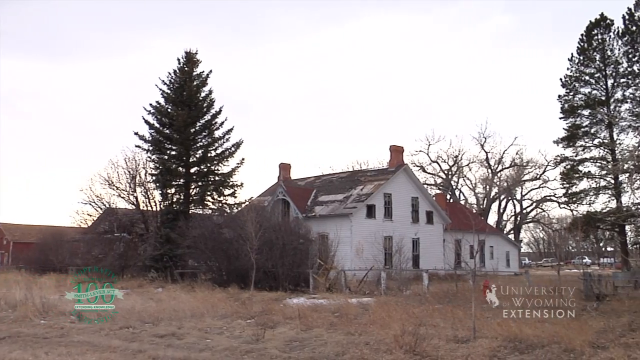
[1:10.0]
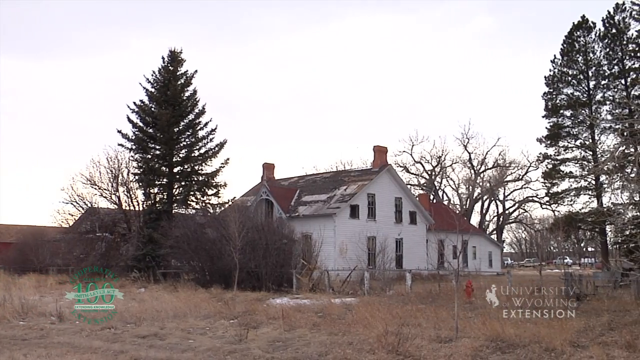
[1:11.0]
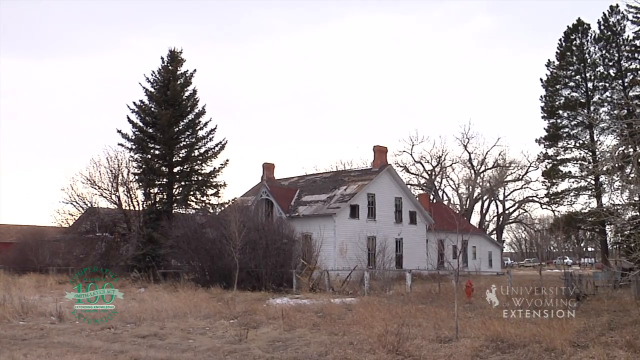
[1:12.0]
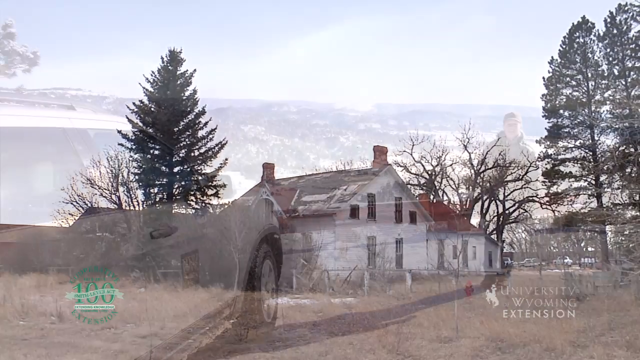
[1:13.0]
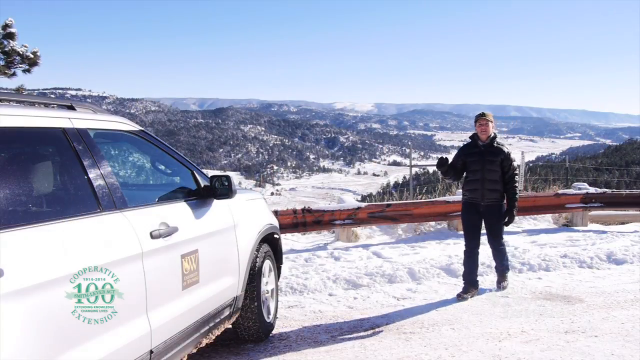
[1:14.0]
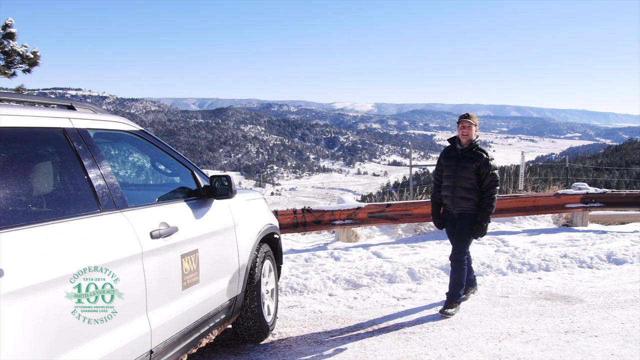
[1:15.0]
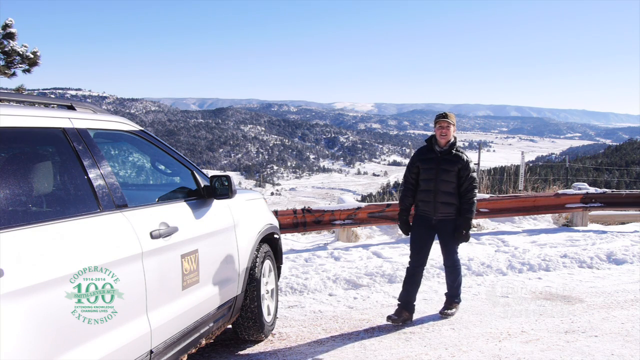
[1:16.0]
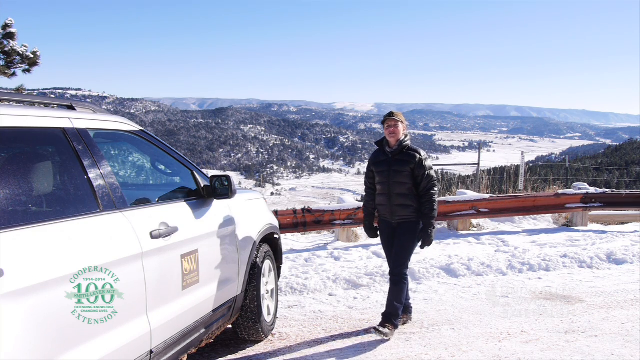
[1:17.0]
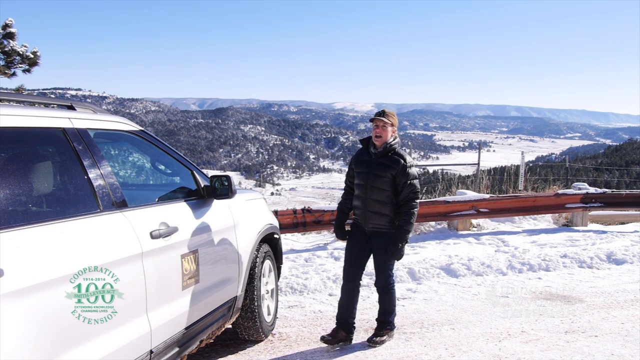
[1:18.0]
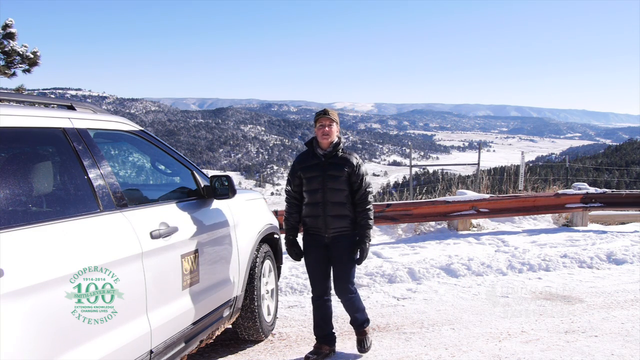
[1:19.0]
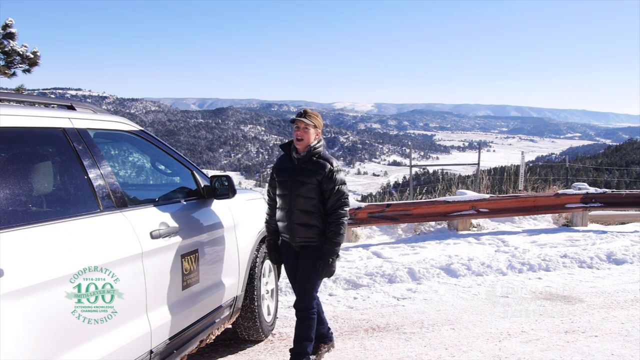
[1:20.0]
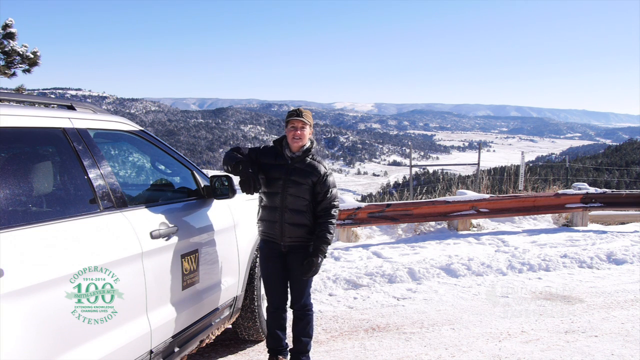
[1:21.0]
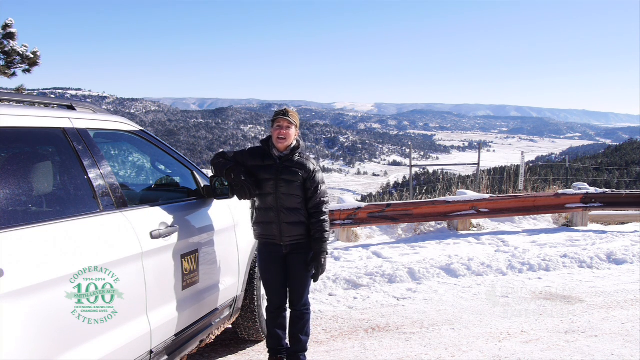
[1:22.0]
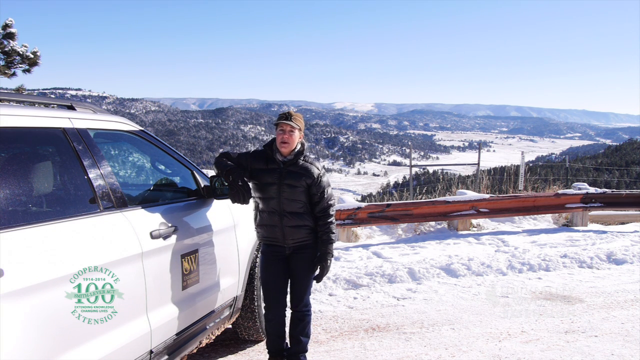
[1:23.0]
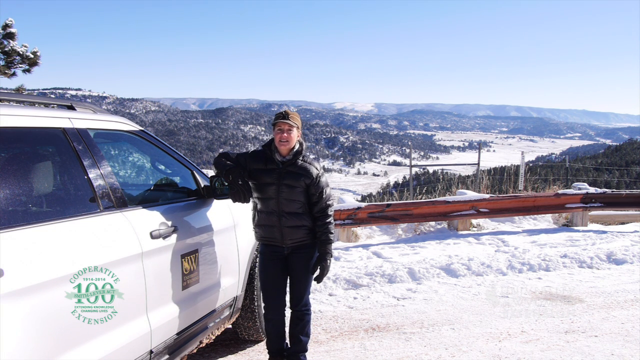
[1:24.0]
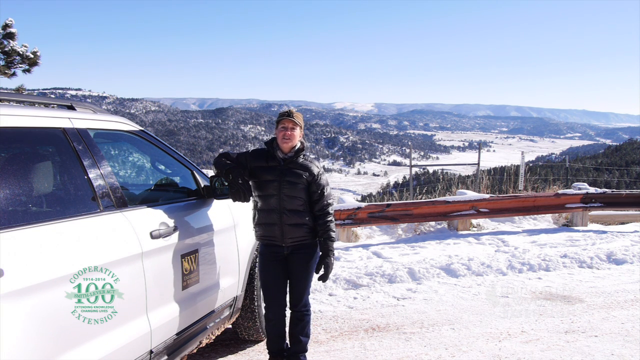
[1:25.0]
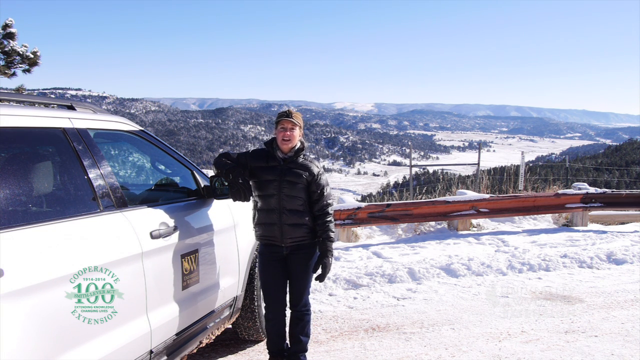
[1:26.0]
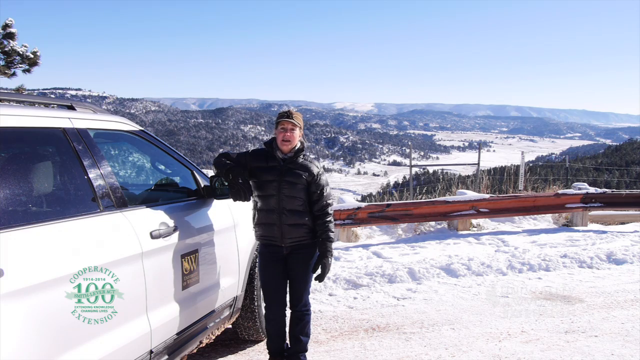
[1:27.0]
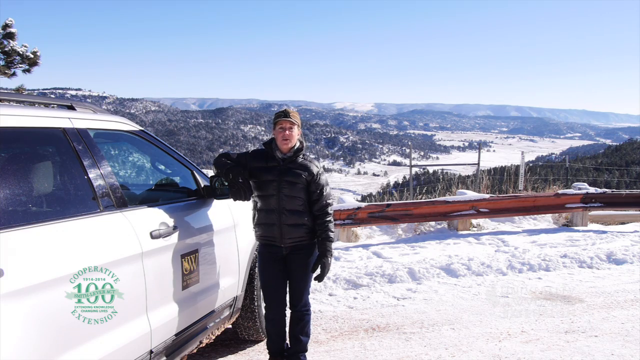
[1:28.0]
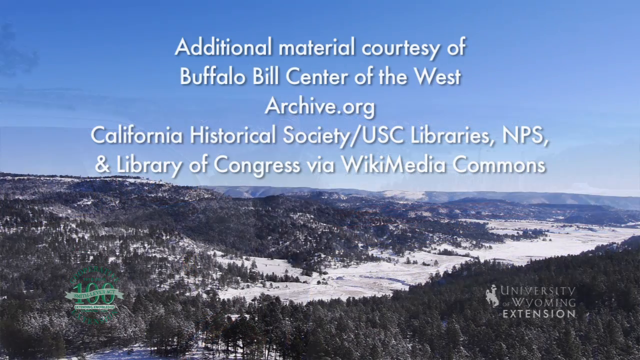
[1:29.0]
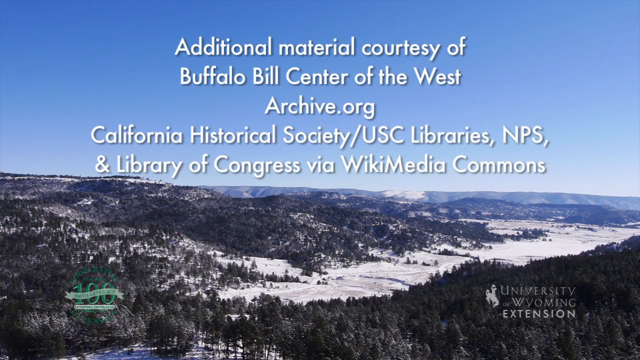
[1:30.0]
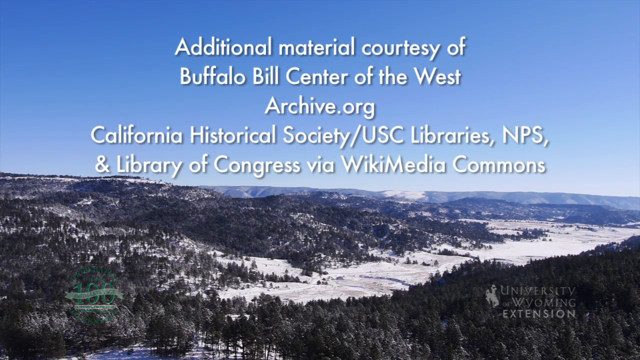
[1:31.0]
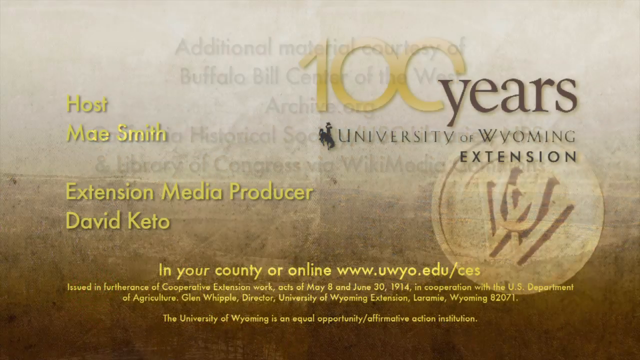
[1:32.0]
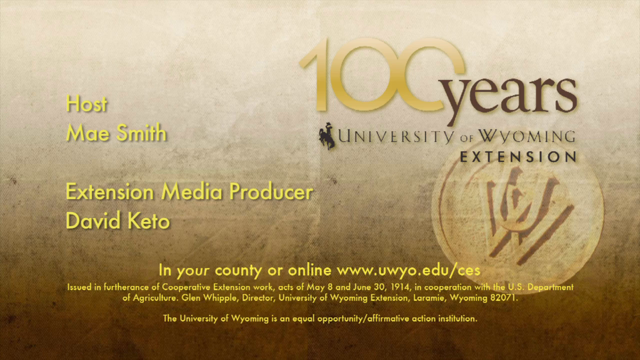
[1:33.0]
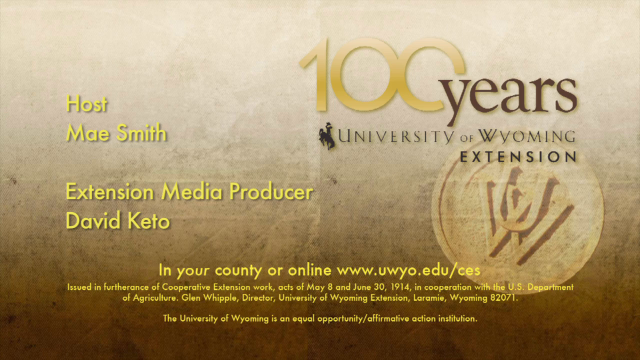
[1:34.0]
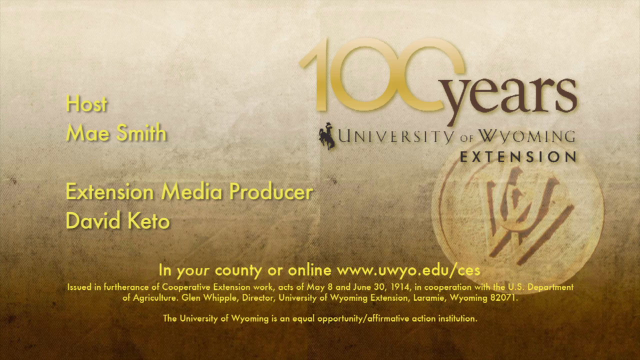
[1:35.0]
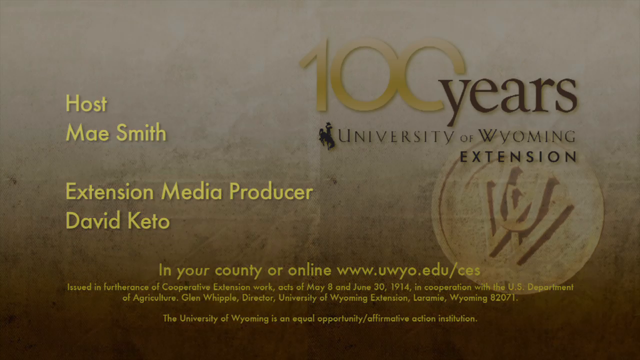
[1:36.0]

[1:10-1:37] The worn-down house is still in view. Then it switches to a scenic view where the woman is higher up, looking over a landscape of what are apparently not very large mountains, covered with trees and snow. She stands closer to the end, which has a piece of wooden board around it. Dressed all in black, she walks toward a white SUV she is parked next to, which has a little logo on the driver-side door; she walks up to the rearview mirror, puts her elbow around it, and continues talking. The video then switches to background scenery with white text that says "additional material courtesy of Buffalo Bill Center of the West, archive.org, California Historical Society, USC Libraries, NPS, and Library of Congress via Wikimedia Commons", followed by text naming the host as Mae Smith and stating it is from the University of Wyoming.